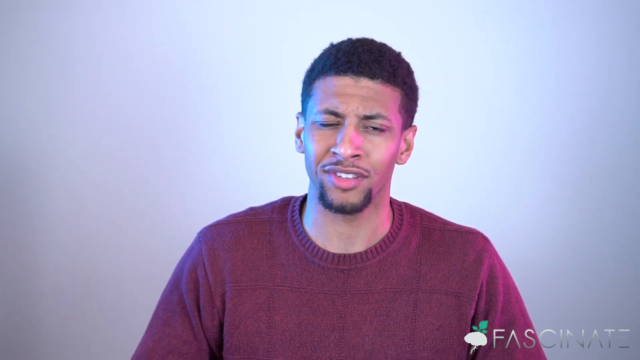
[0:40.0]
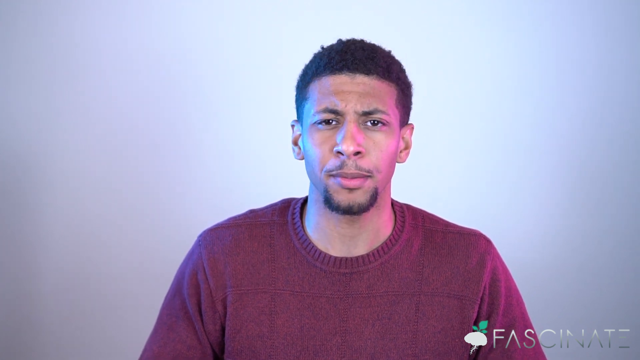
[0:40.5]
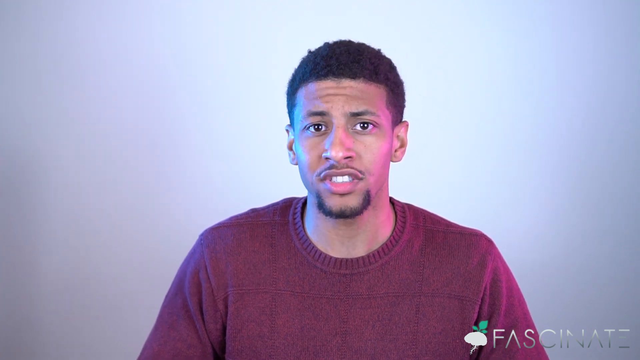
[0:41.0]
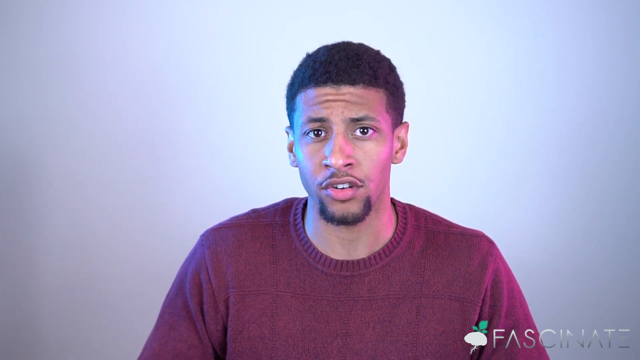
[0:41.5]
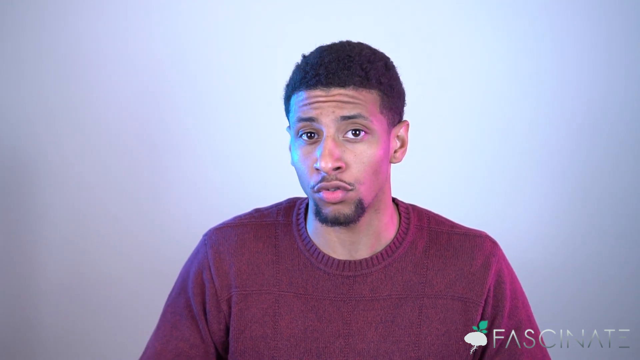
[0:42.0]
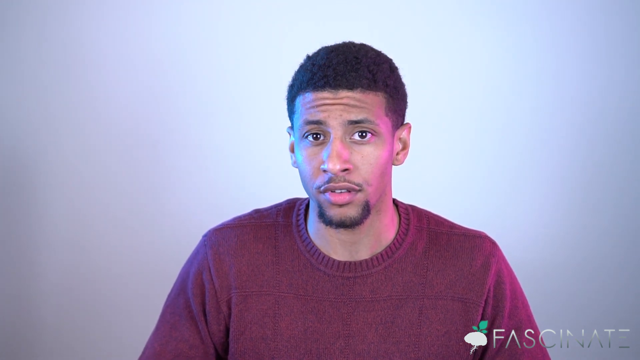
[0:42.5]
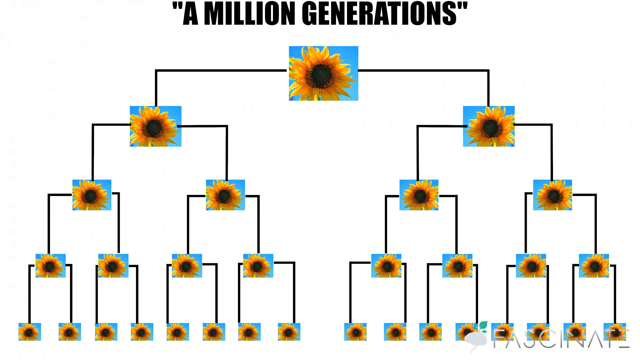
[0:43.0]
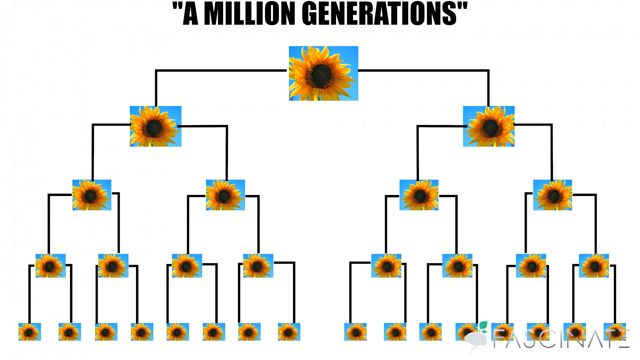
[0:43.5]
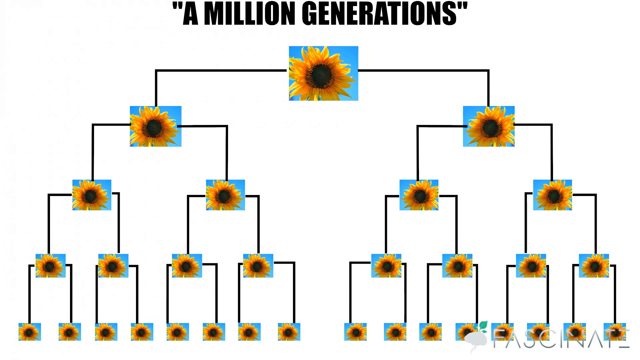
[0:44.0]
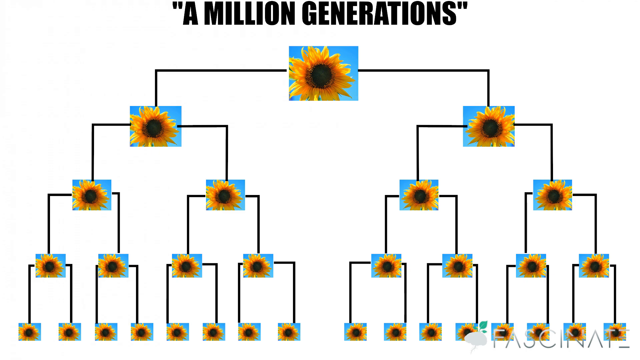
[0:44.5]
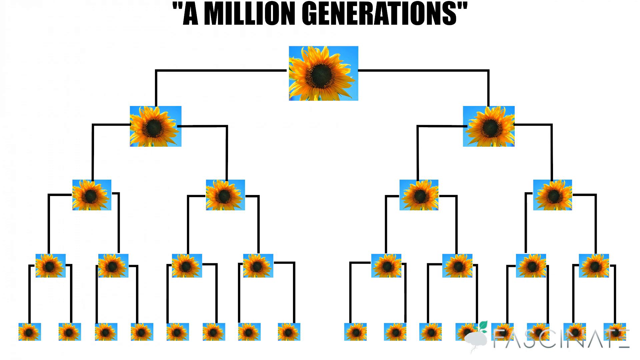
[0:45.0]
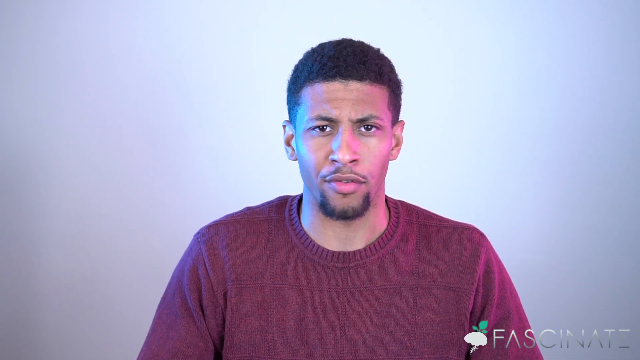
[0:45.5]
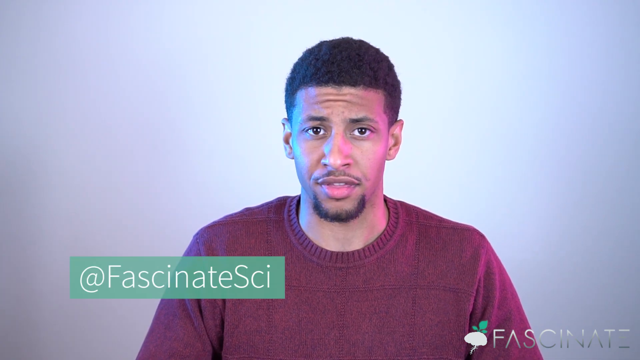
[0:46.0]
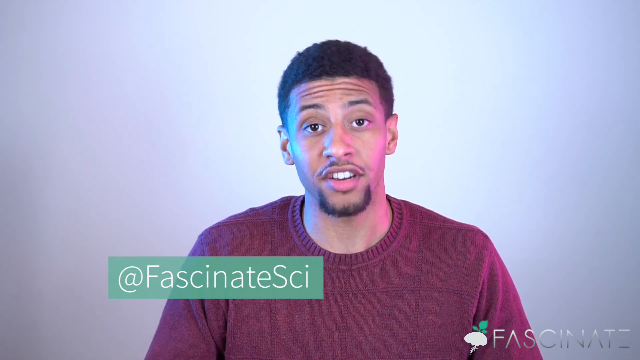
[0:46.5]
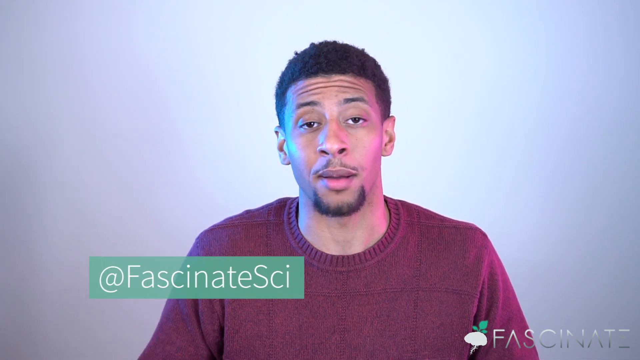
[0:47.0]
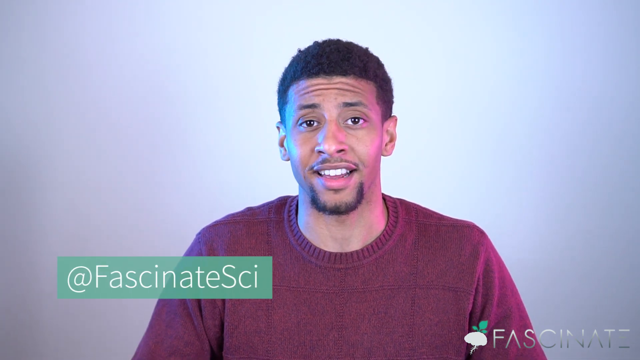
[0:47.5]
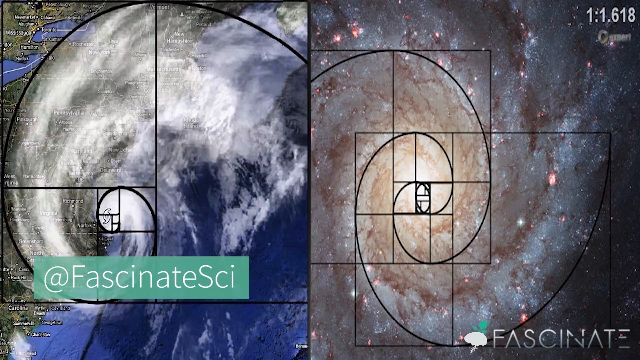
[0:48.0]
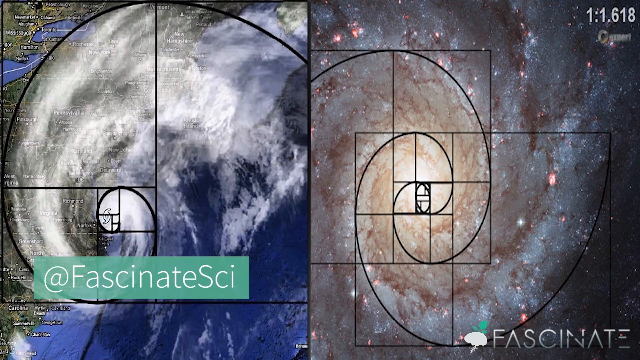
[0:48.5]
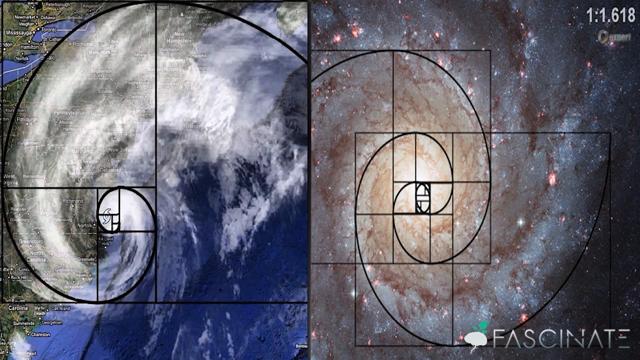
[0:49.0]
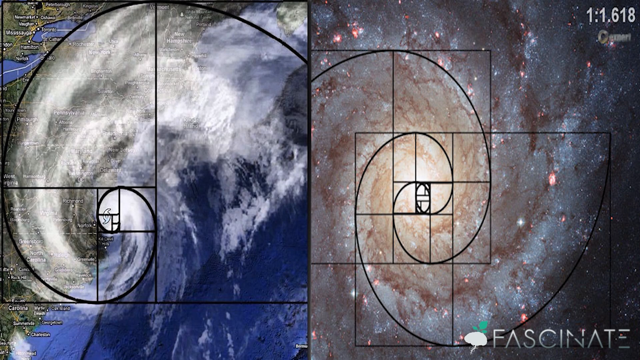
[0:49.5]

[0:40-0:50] The man continues to speak, and a new image appears displaying "A MILLION GENERATIONS". It appears to be something of a family tree-like image with one sunflower at the top. On the left and the right, radiating down in a vertical hierarchical pattern, is another sunflower, and below each sunflower is another sunflower, extending lower and lower as the pattern repeats. The man is shown with another text box showing "FascinateSci", which oscillates back and forth before disappearing off the screen. Two images appear side by side with the golden ratio pattern displayed over them: on the left, a weather map showing storm clouds, and on the right, a galaxy.